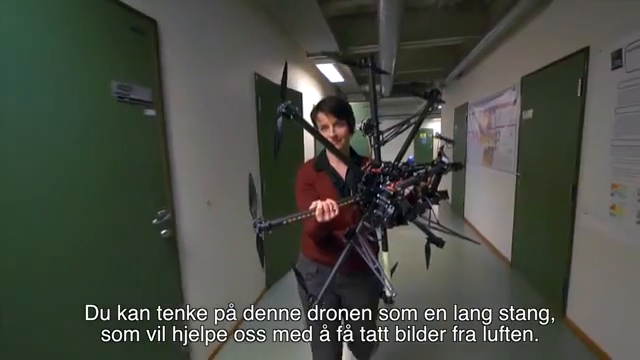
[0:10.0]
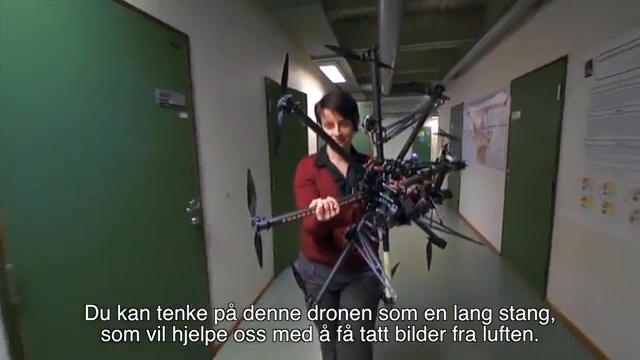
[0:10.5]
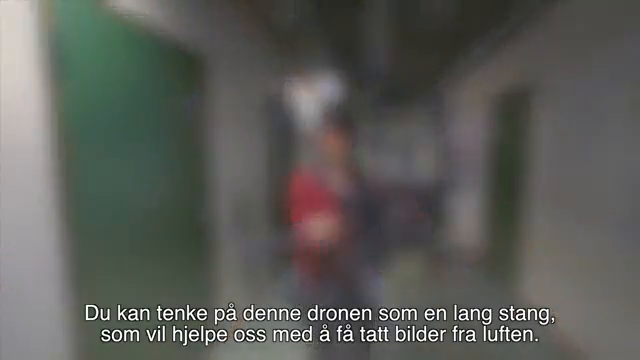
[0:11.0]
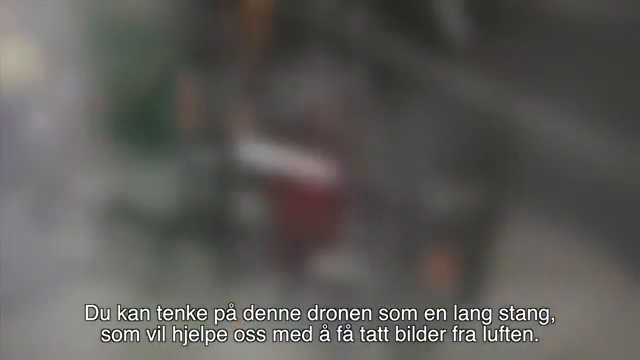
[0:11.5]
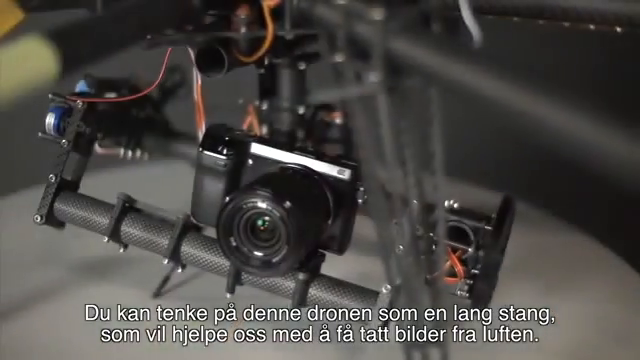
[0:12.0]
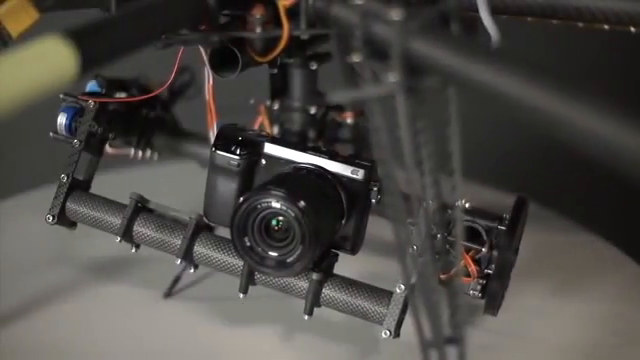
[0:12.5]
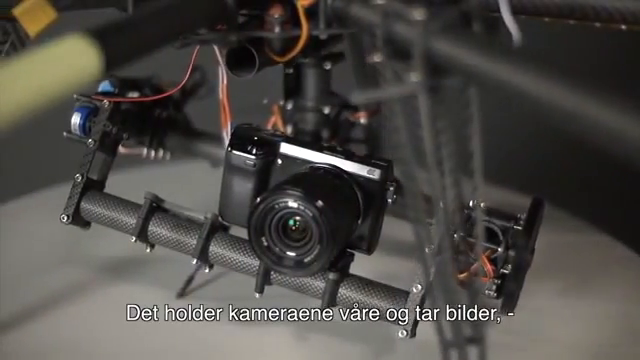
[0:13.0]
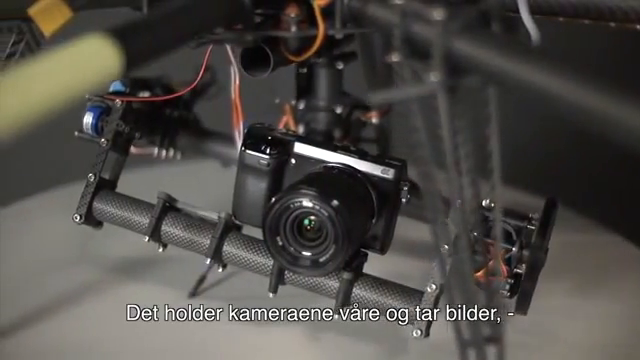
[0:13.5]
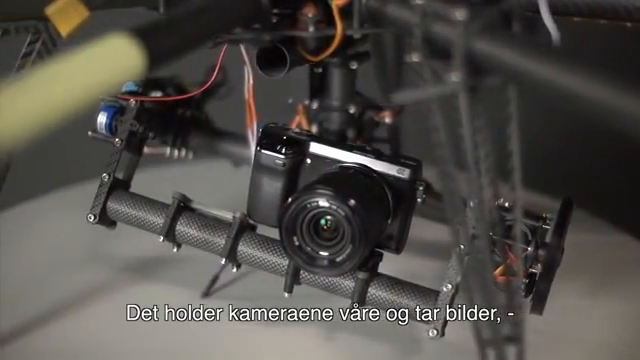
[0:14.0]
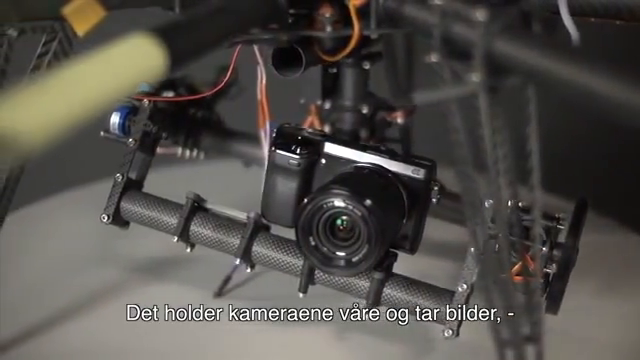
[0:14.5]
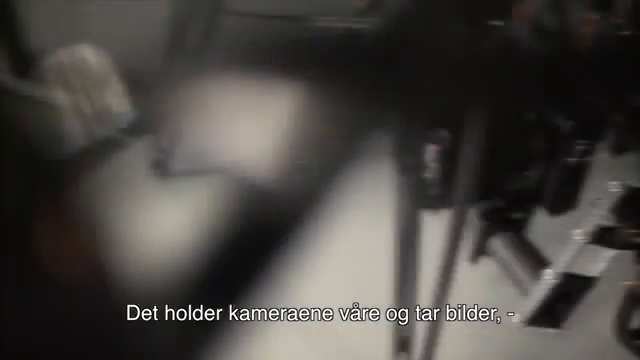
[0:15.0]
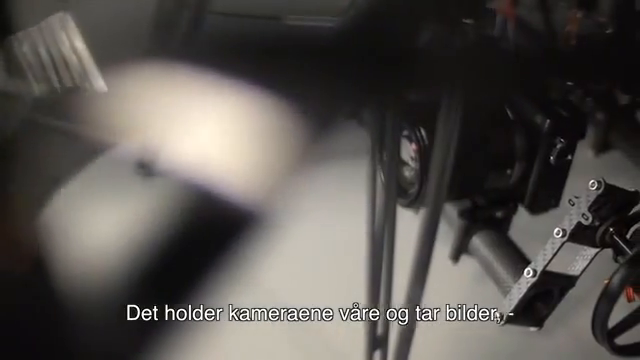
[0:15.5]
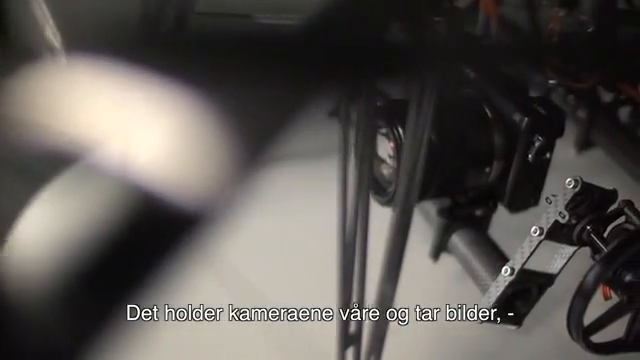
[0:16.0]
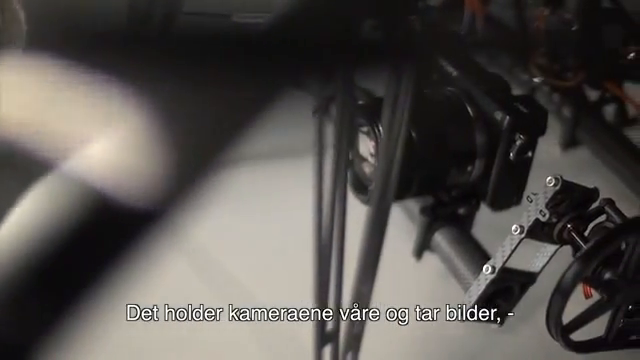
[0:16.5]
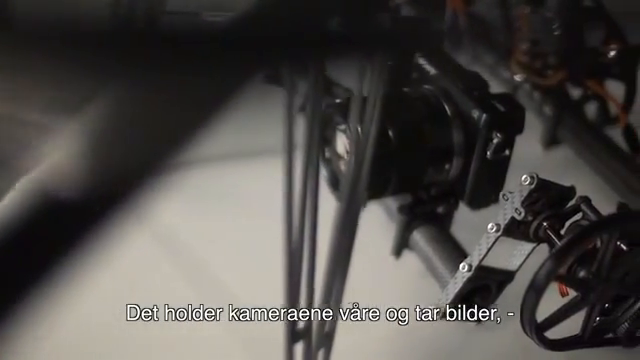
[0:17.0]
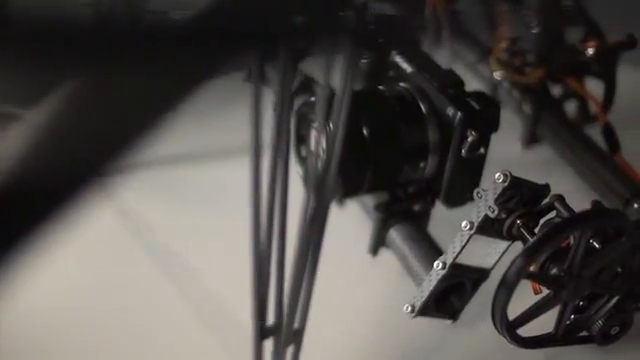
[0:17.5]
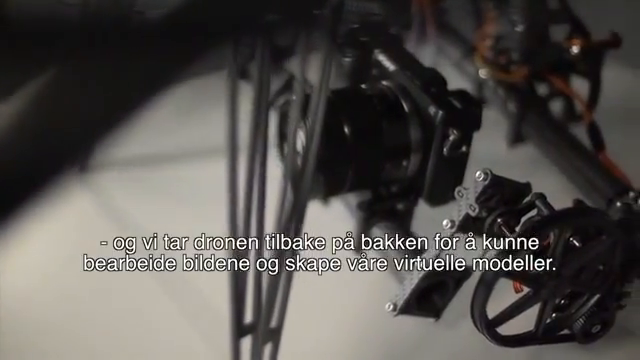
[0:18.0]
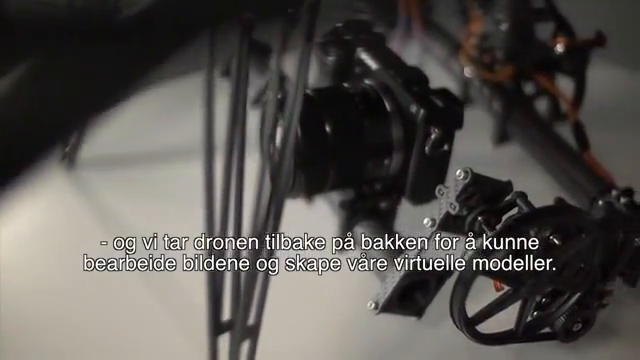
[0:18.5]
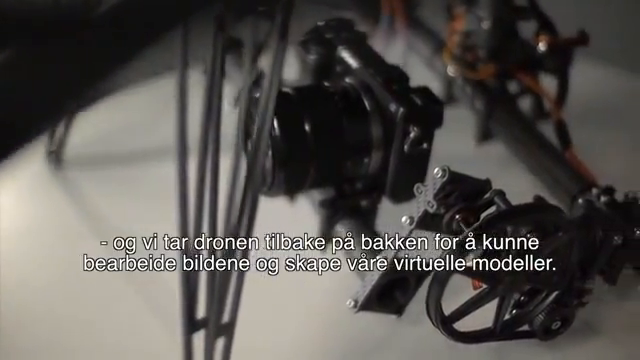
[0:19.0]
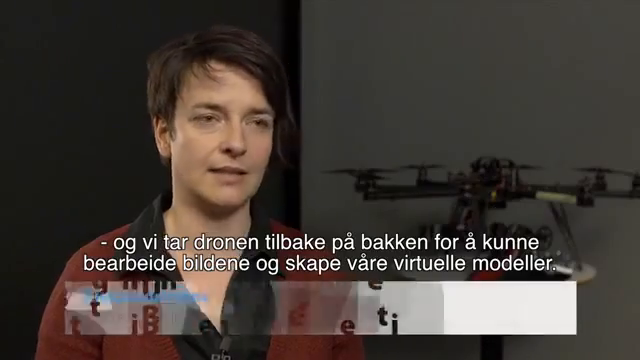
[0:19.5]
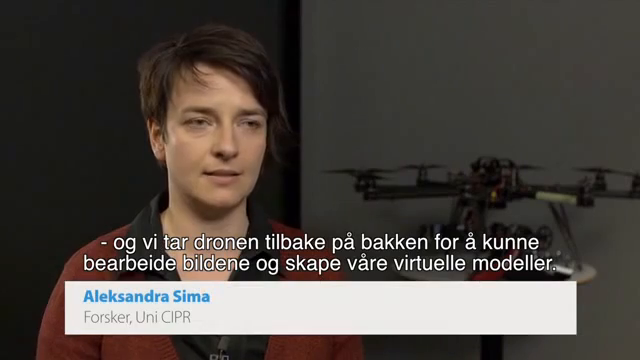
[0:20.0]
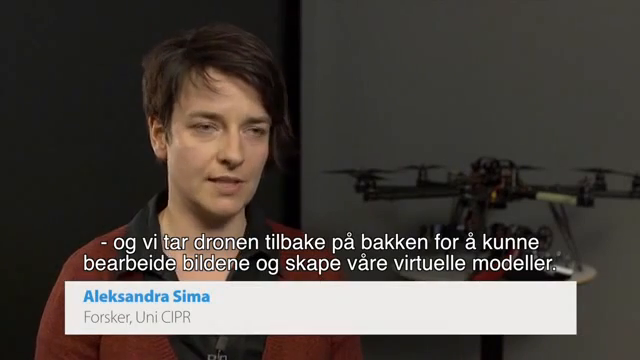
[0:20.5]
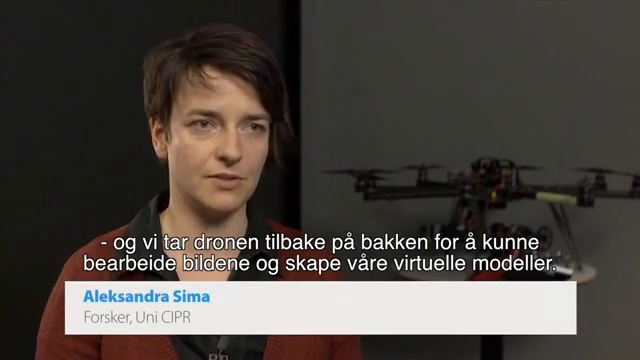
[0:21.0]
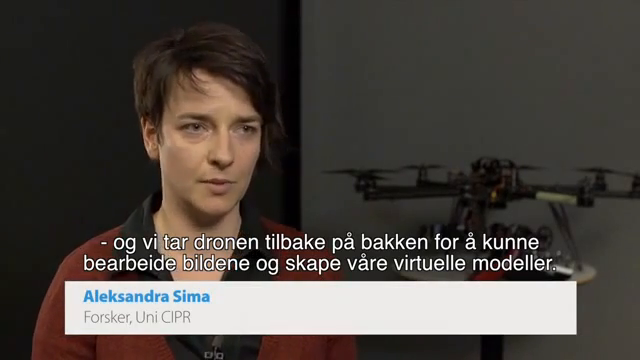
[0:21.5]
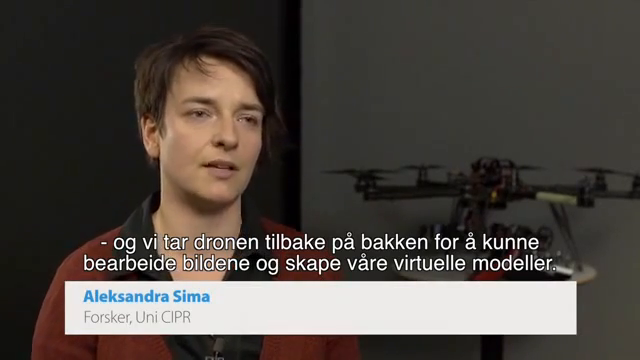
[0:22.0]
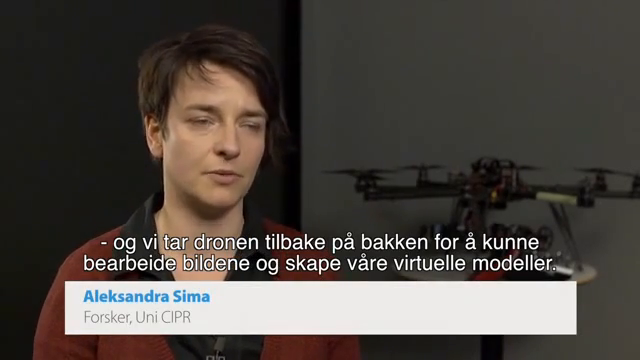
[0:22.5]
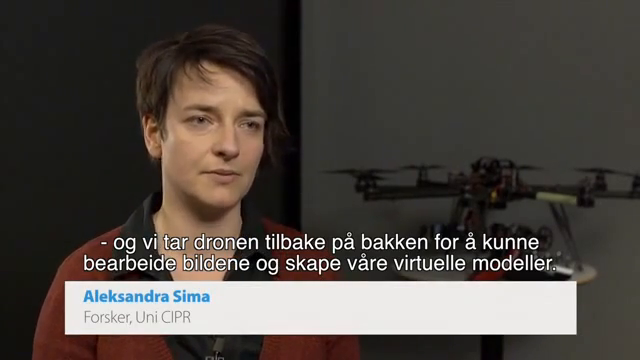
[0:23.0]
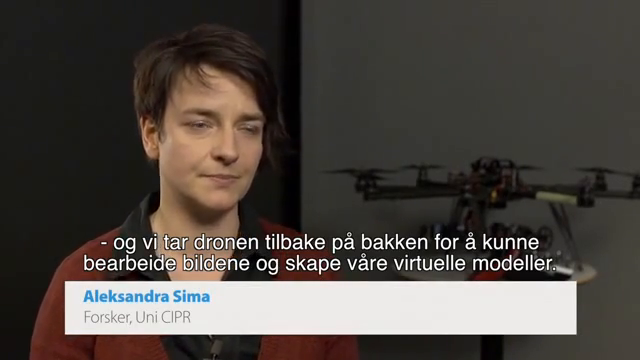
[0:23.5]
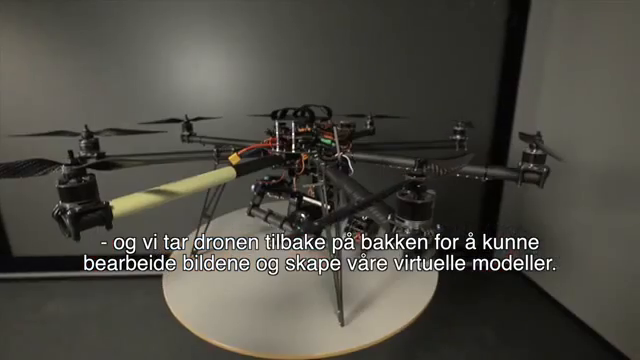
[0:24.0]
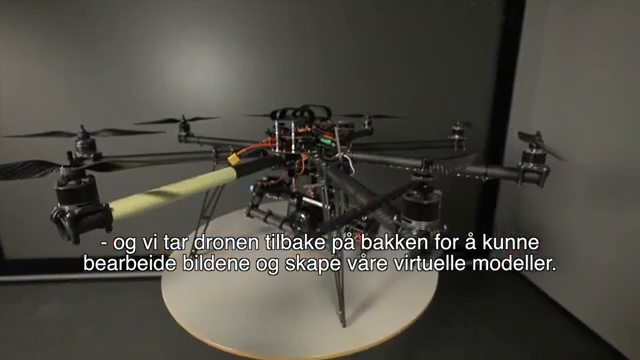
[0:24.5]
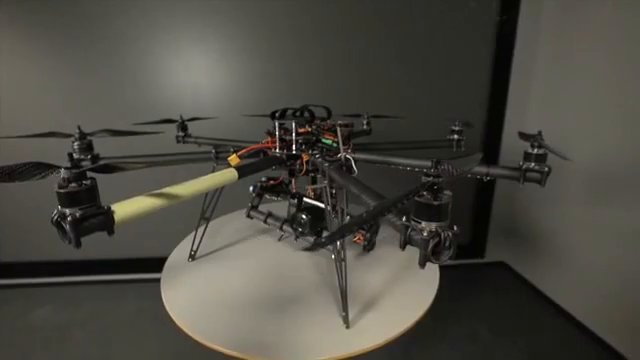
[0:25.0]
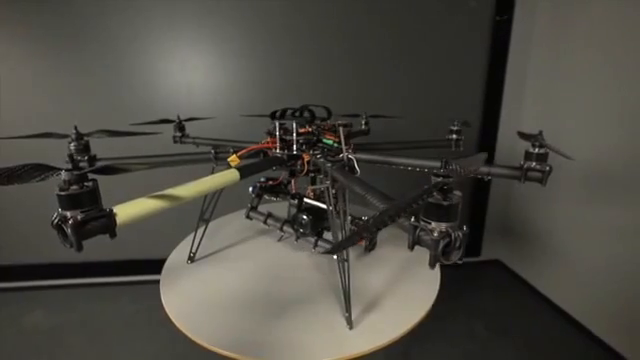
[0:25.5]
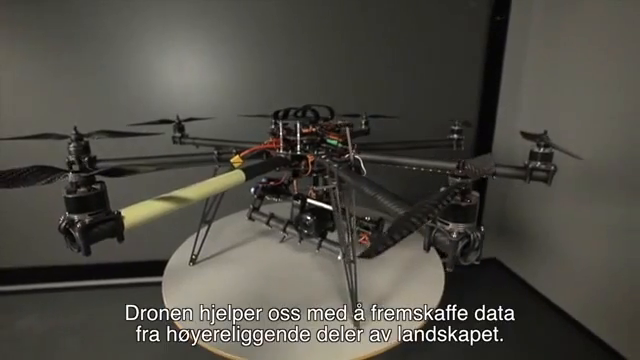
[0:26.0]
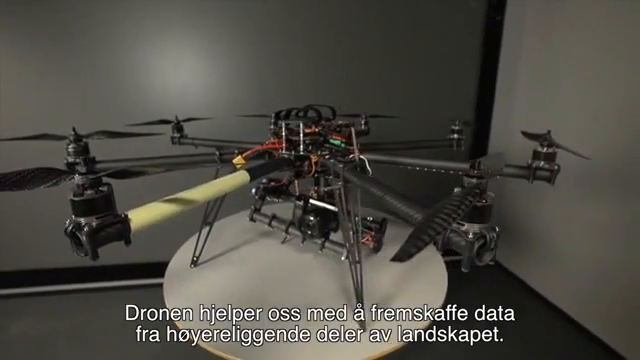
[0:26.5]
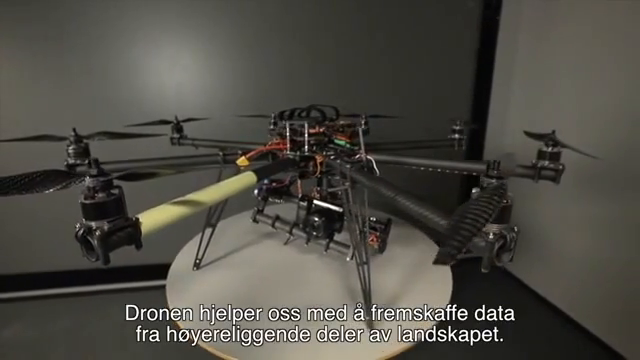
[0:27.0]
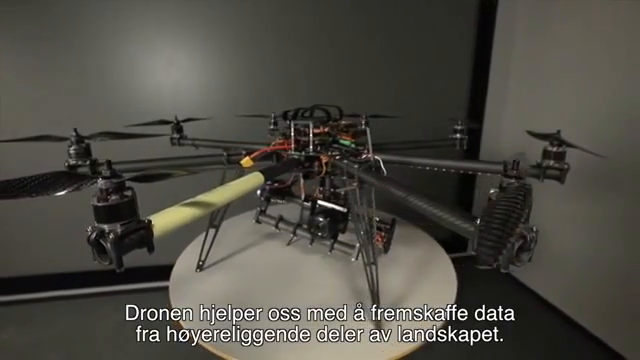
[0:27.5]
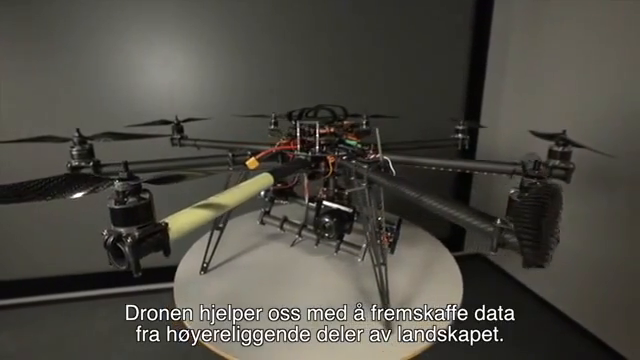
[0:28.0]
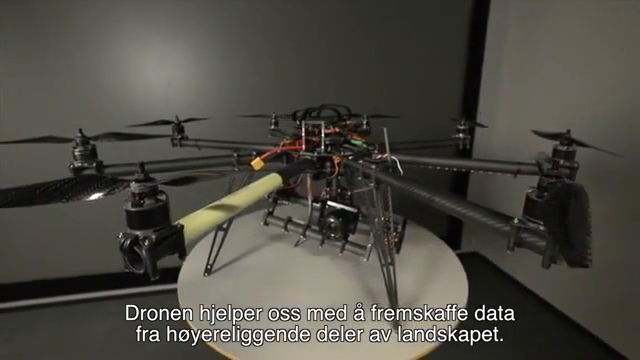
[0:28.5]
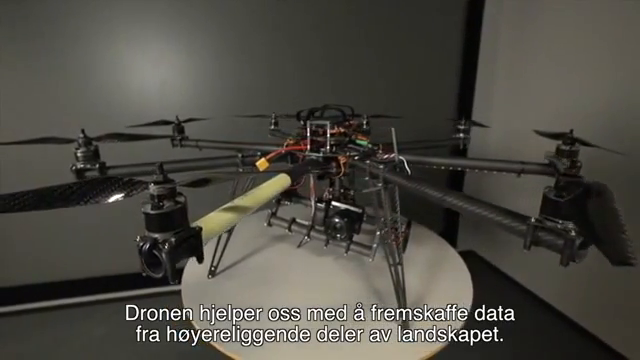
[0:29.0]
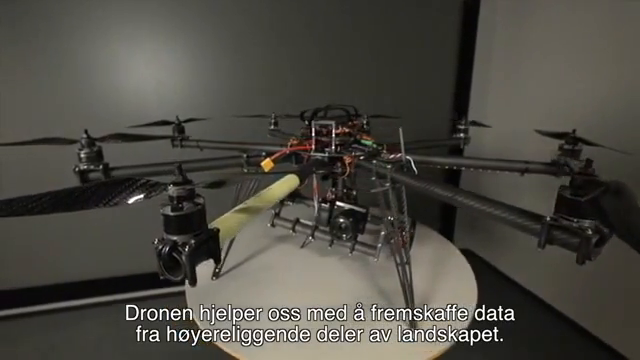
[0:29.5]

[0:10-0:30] Briefly, the man continues walking down the hallway, holding the drone helicopter in his hands. The setting then changes to a different room, where the drone helicopter is placed on a table and the camera keeps recording it. The drone has a camera on it. The setting stays the same while the camera angles change. The video then cuts to a personal interview with the man who carried the helicopter down the hallway; he is shown talking for about three seconds, with a caption in a different language on the screen. The scene then returns to the drone on its table, and the camera continues to record around it.